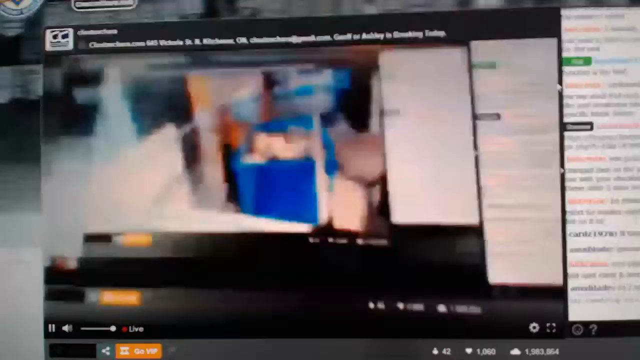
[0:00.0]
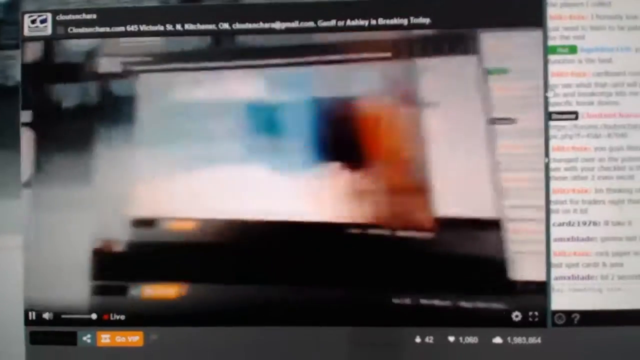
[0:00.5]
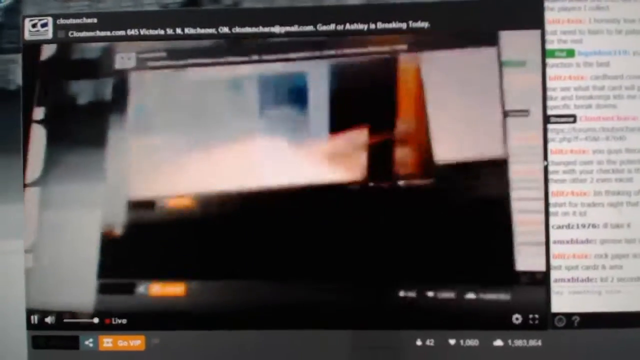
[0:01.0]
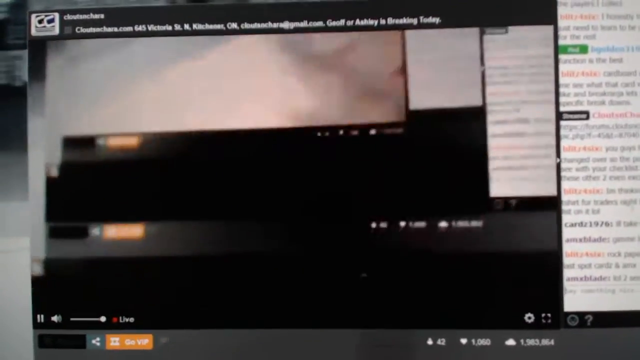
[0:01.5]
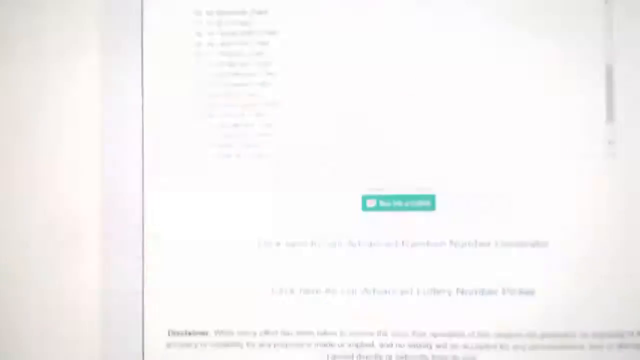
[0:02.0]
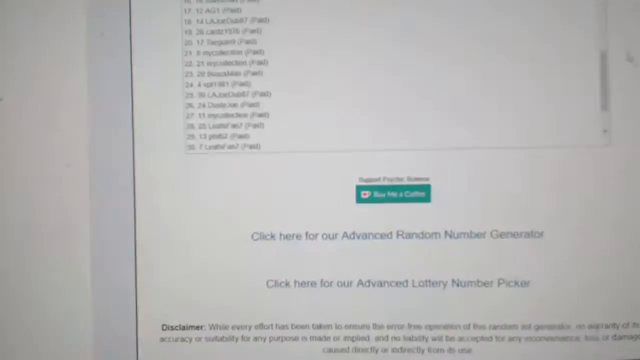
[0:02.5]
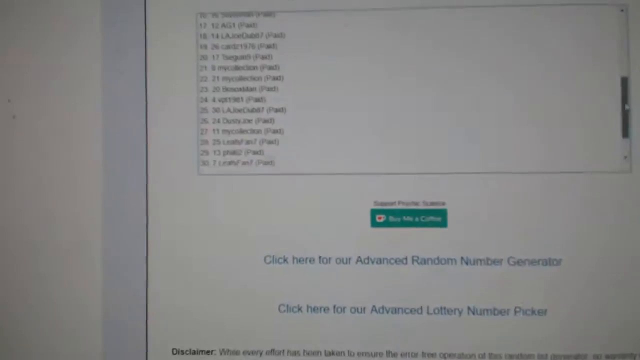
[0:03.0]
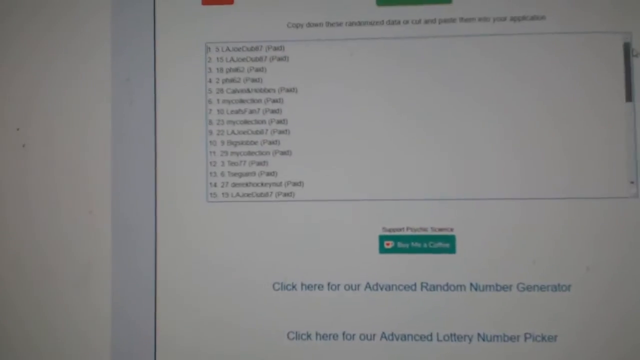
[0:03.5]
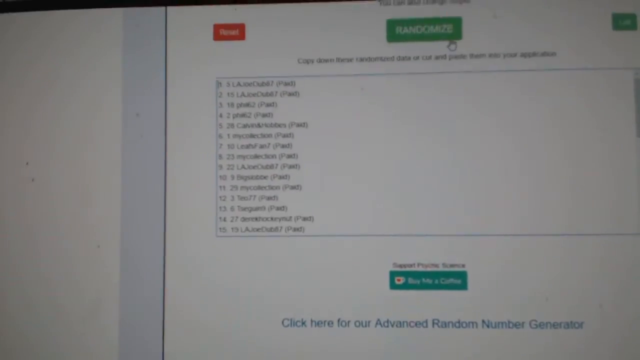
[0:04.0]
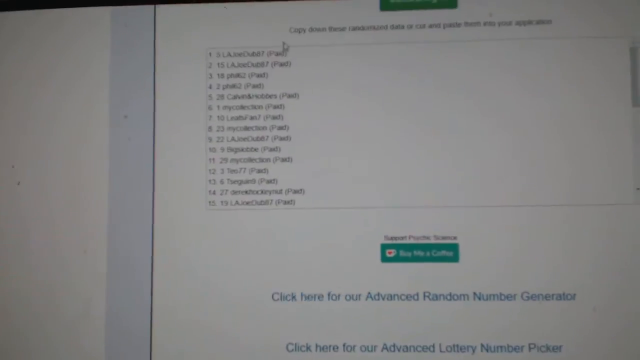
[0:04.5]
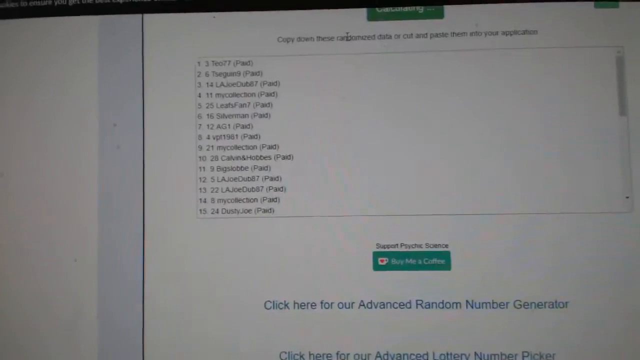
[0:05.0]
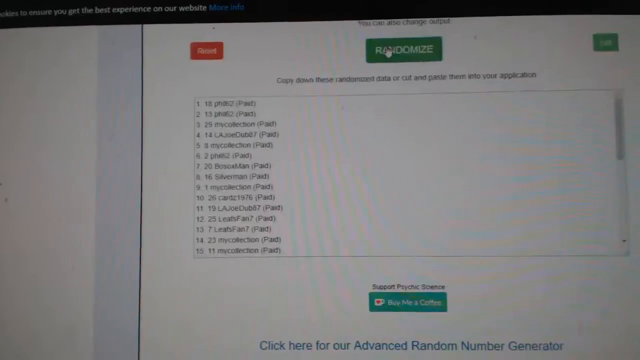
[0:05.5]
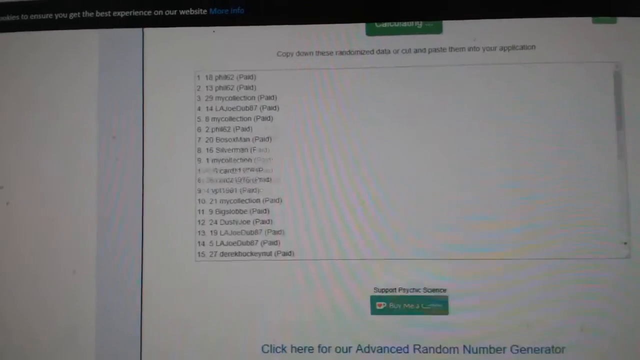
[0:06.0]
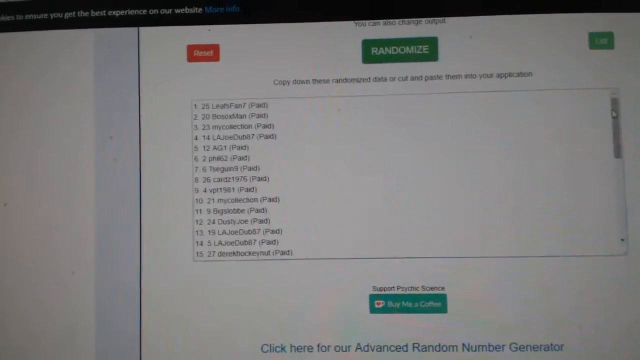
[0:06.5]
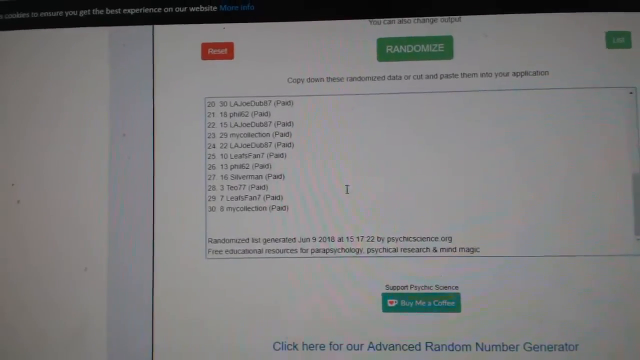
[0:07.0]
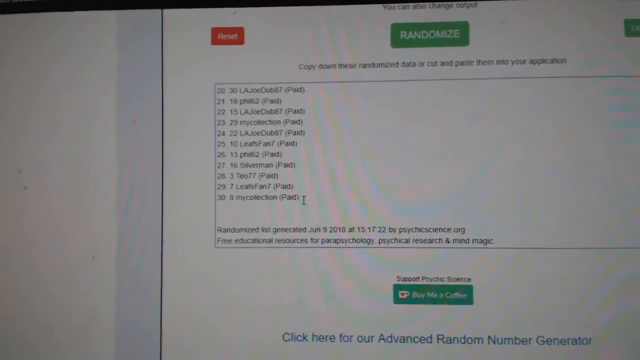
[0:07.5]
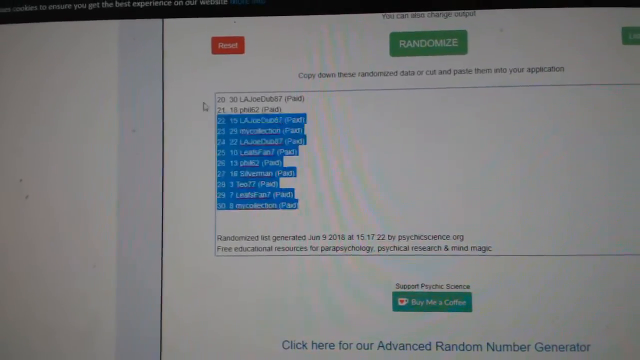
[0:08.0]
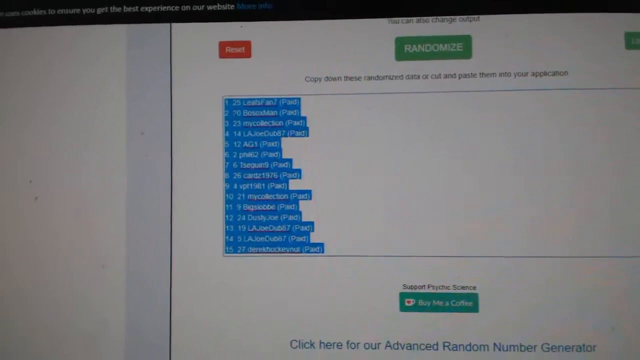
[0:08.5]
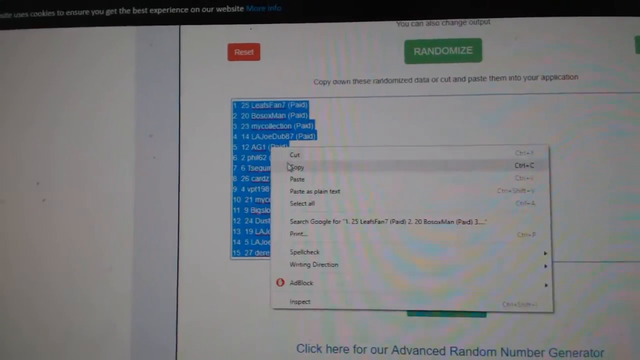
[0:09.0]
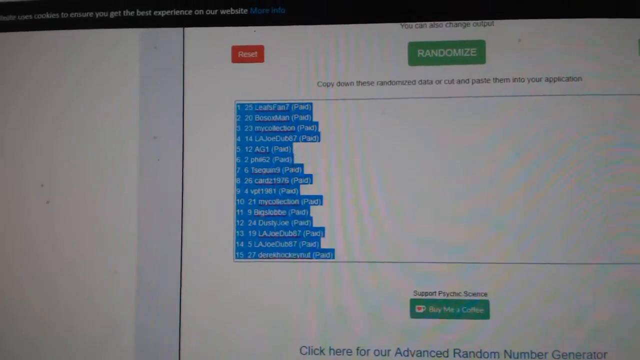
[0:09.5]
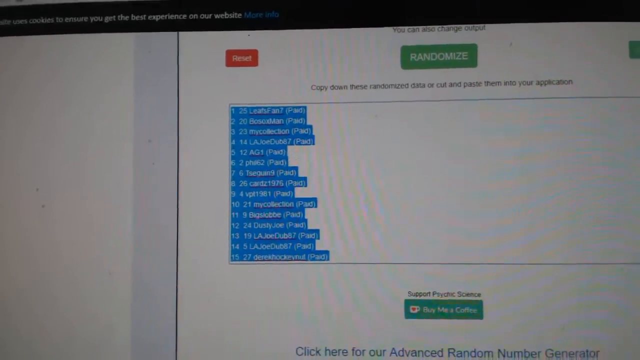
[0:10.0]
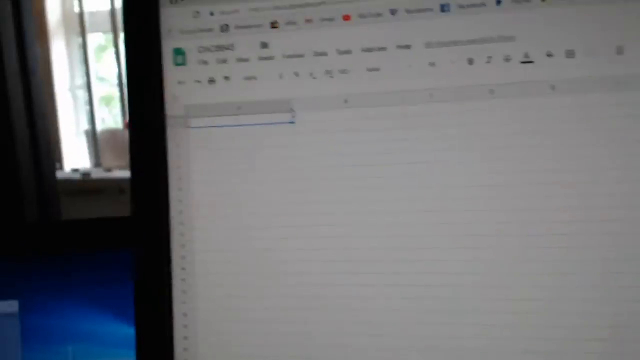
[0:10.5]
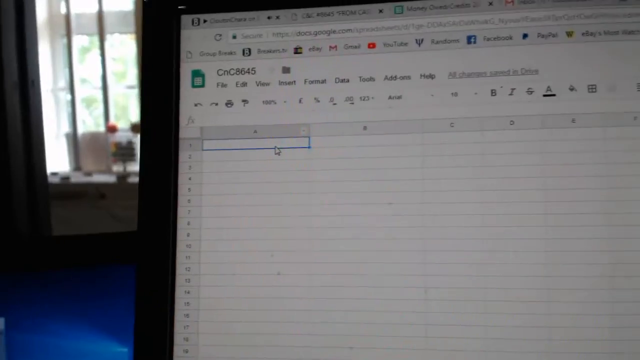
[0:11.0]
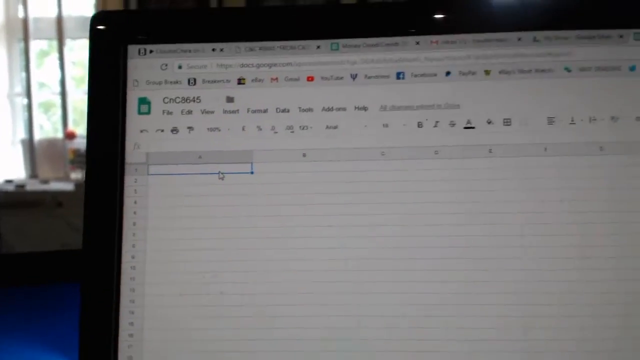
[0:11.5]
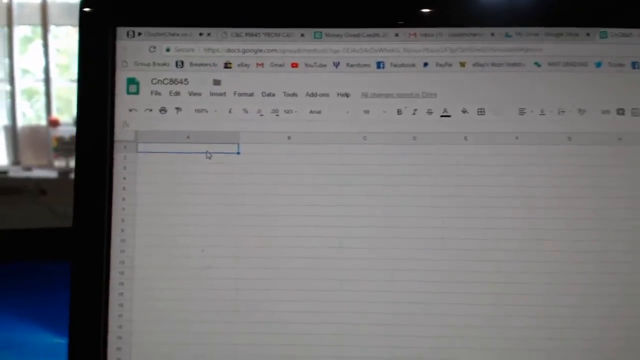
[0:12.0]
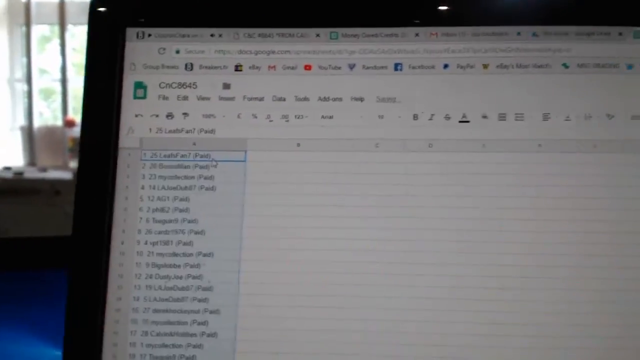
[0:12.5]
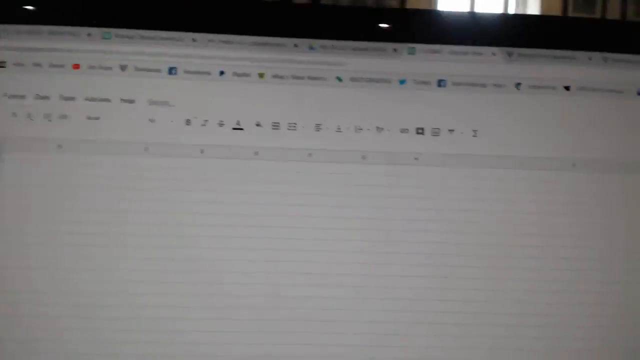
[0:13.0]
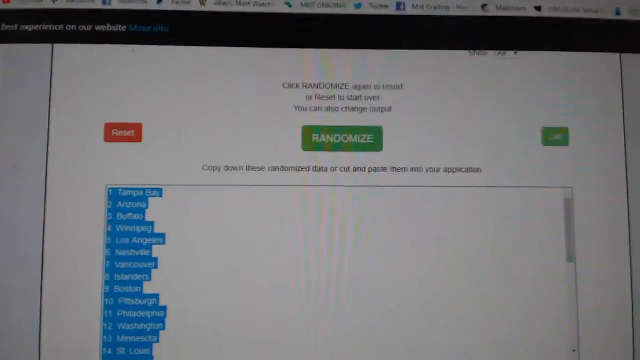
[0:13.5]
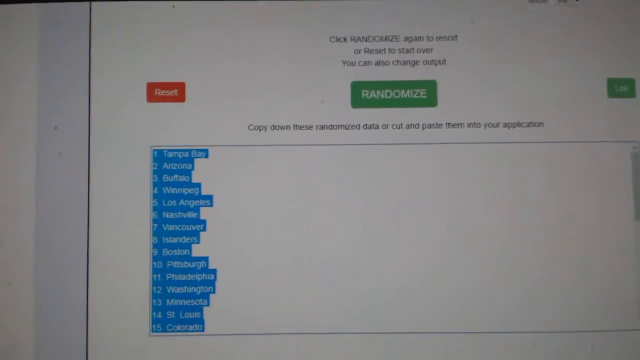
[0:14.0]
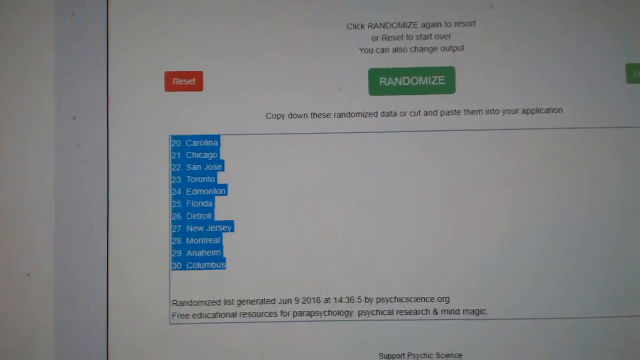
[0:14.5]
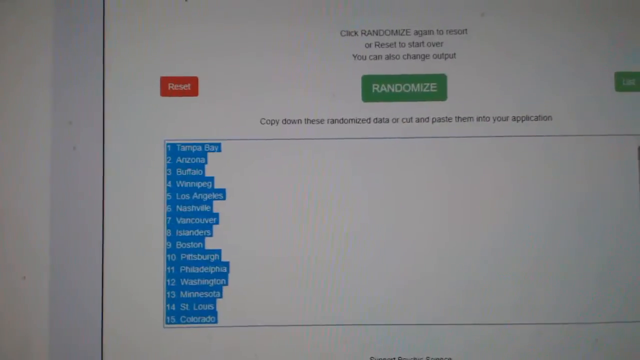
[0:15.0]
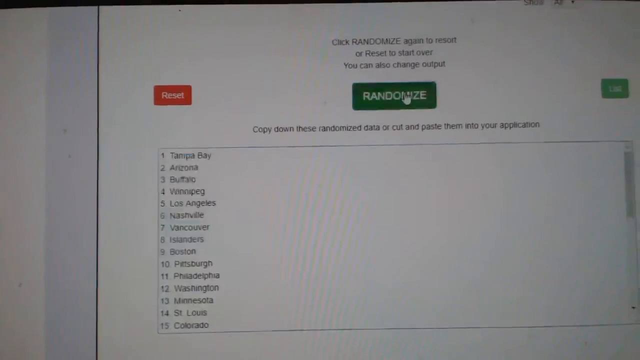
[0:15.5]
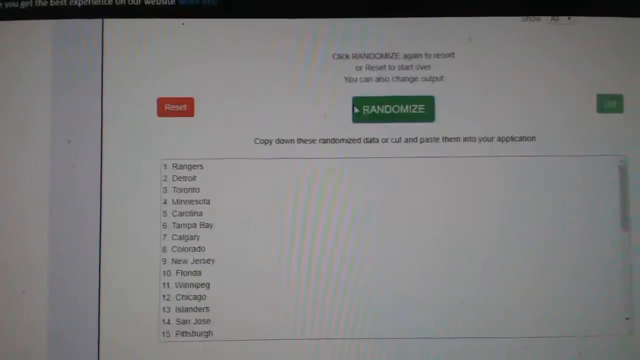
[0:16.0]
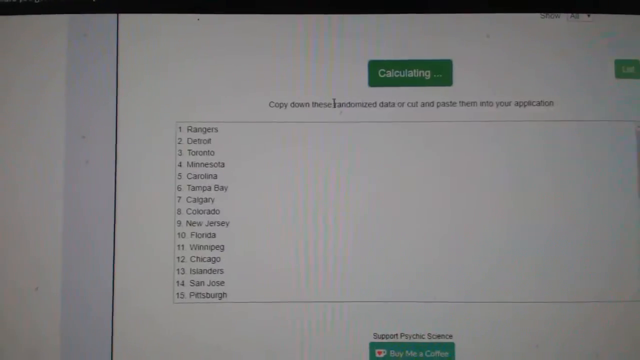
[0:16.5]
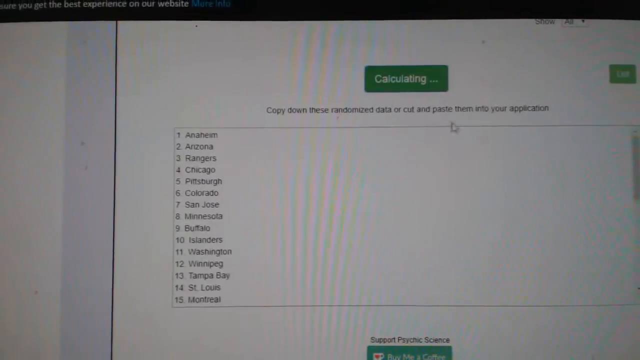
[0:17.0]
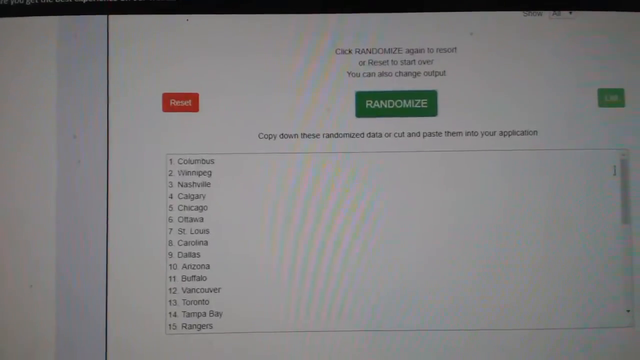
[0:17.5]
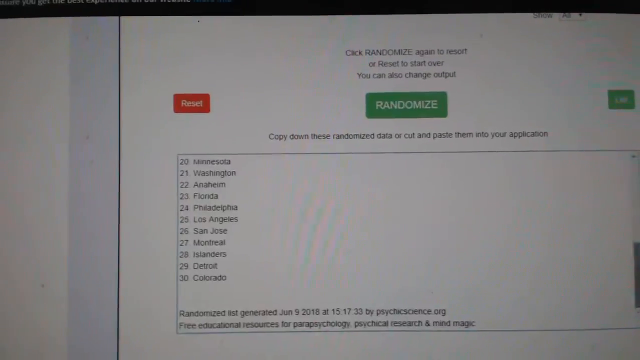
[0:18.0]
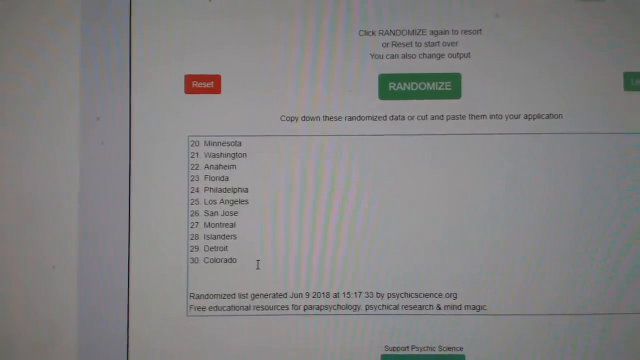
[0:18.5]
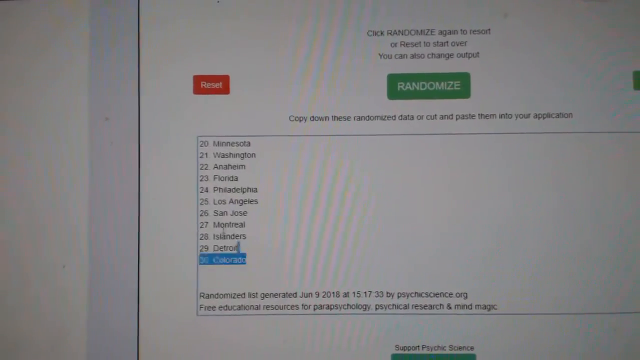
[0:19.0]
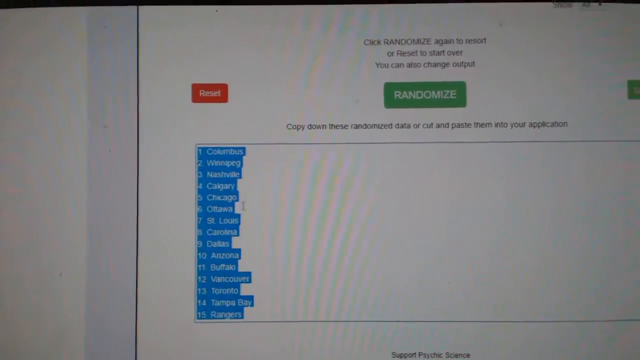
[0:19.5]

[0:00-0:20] Somebody shows a computer screen, apparently recording it with a phone rather than with a screencast or screen recording program, and highlights things on it. The movement is fast and very jumpy. Something called randomize appears, and then an Excel spreadsheet is opened. The phone is probably held in the person's left hand. They are in some type of room, and as the camera pans to the left a window is visible in the background. Several screens seem to be open at once on the computer, but the image is blurred and hard to make out. Judging by the angle of the screen, it seems to be a laptop.